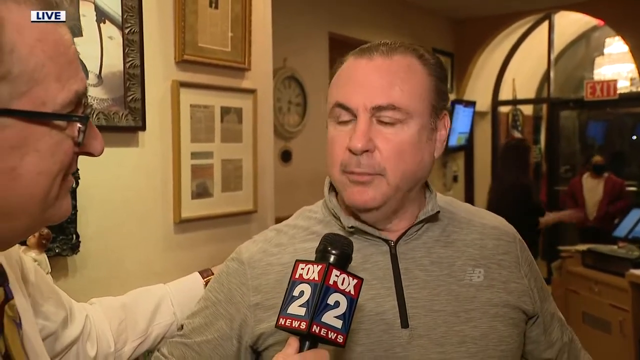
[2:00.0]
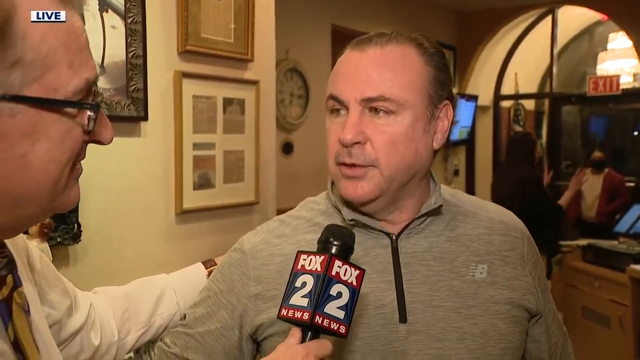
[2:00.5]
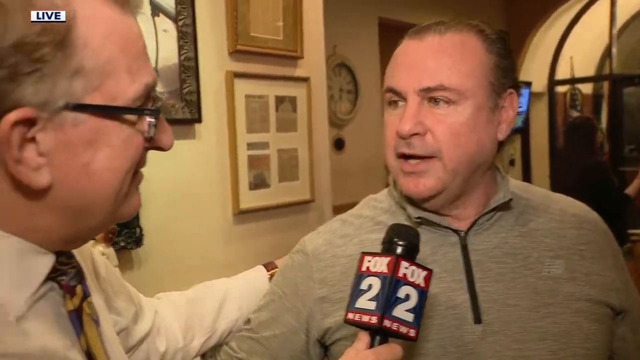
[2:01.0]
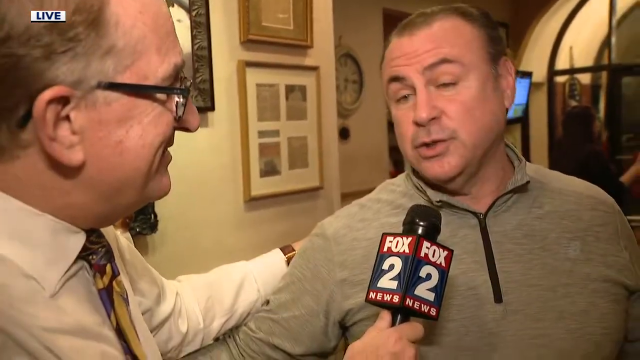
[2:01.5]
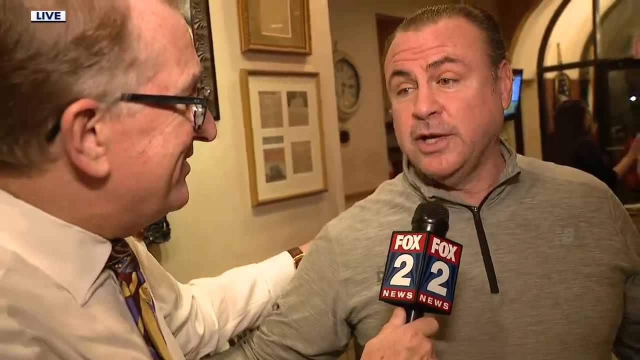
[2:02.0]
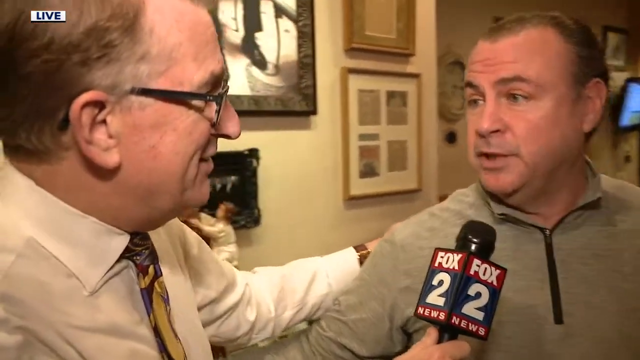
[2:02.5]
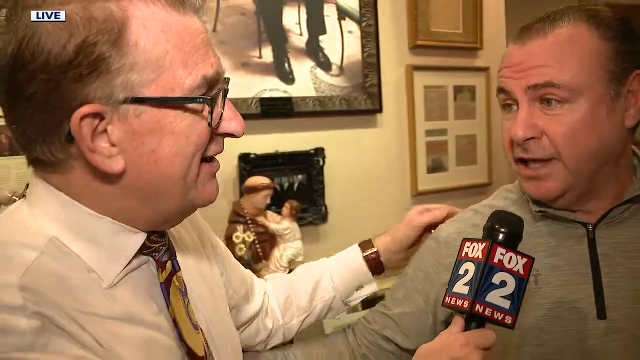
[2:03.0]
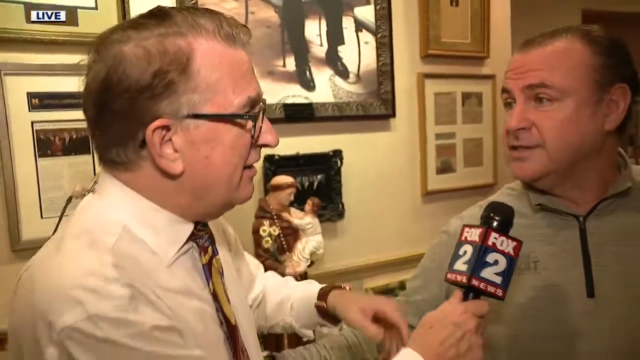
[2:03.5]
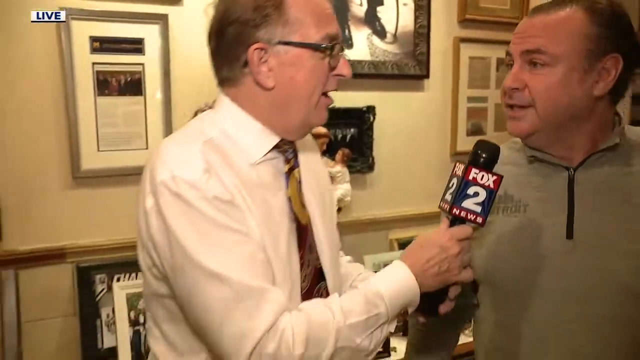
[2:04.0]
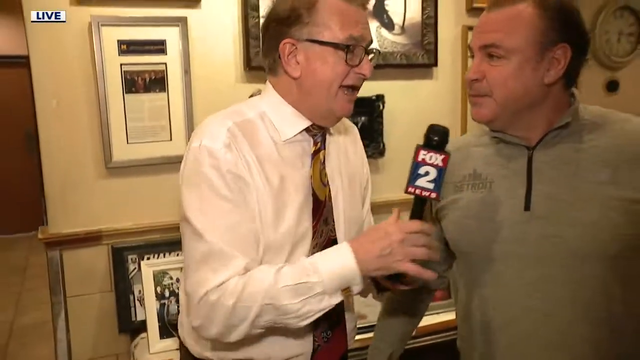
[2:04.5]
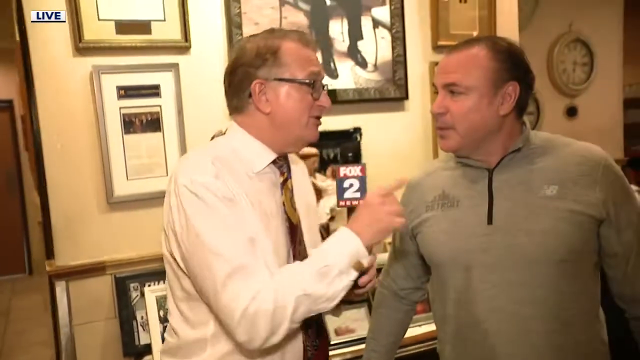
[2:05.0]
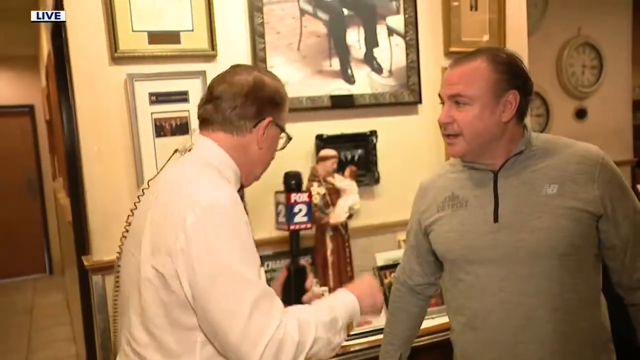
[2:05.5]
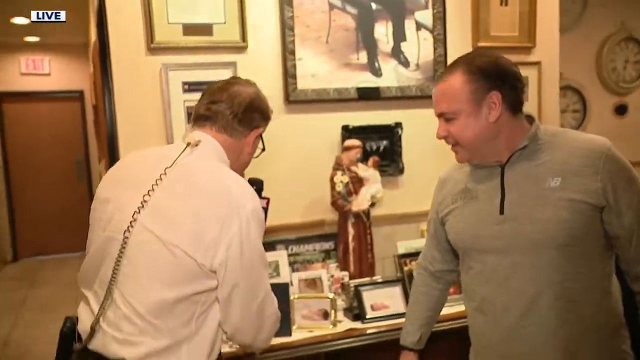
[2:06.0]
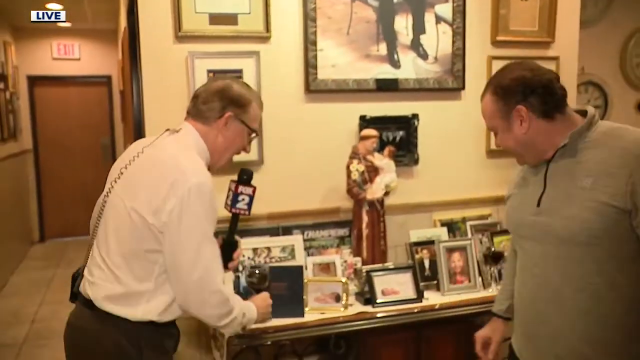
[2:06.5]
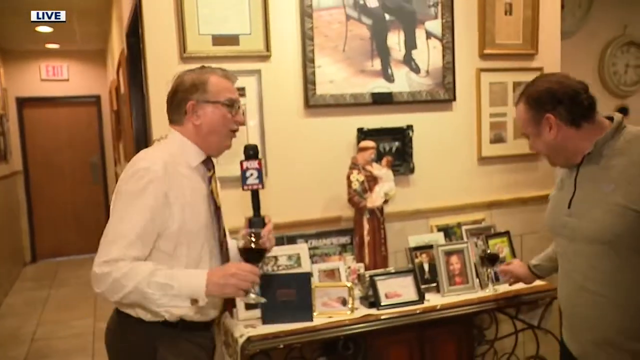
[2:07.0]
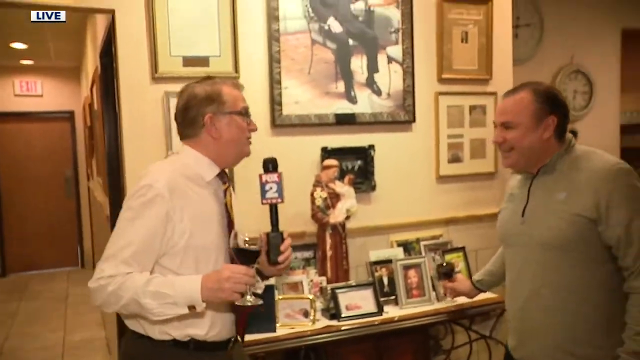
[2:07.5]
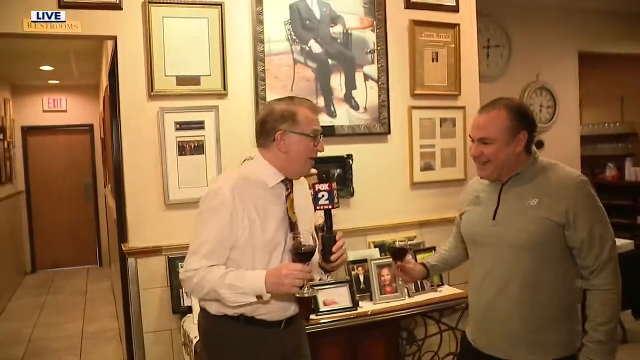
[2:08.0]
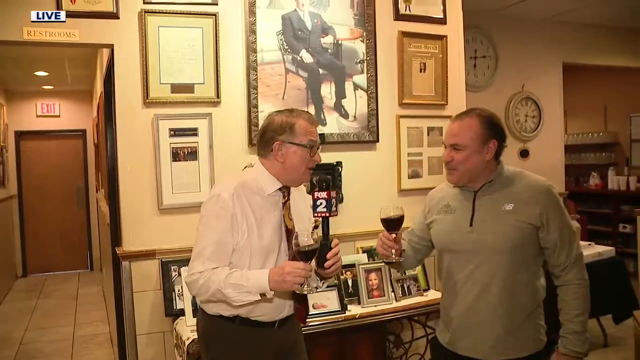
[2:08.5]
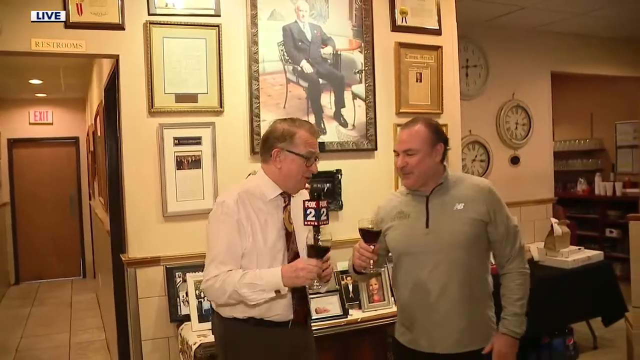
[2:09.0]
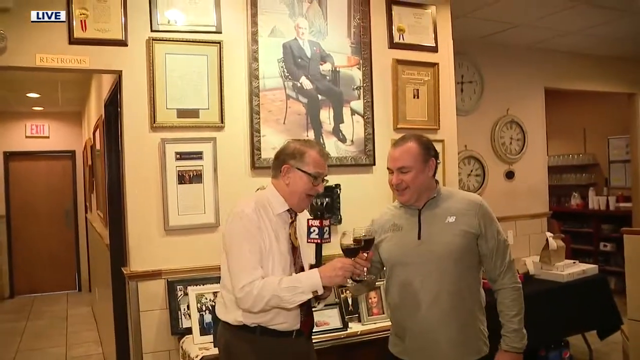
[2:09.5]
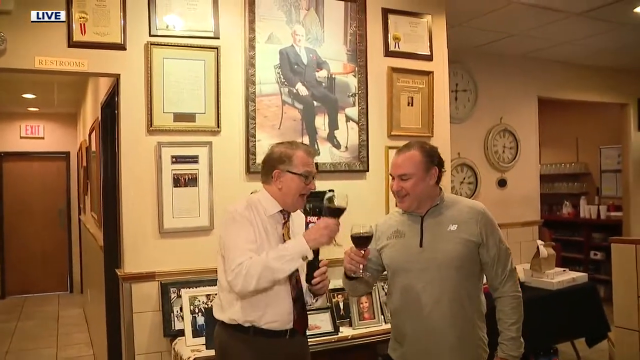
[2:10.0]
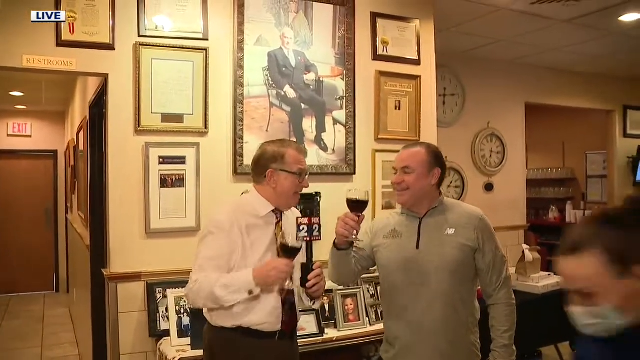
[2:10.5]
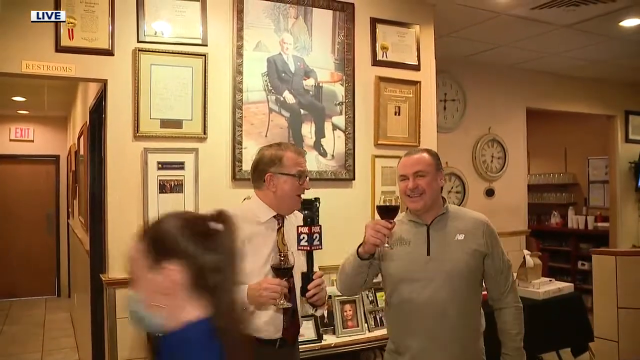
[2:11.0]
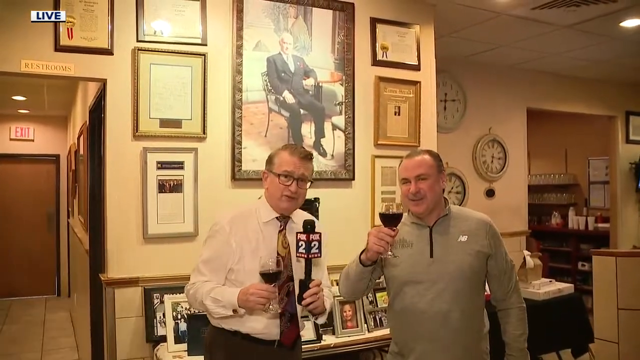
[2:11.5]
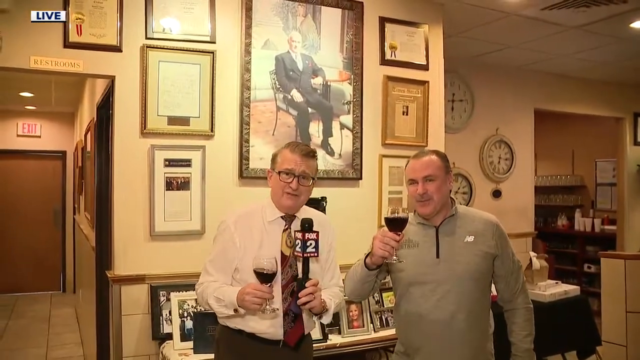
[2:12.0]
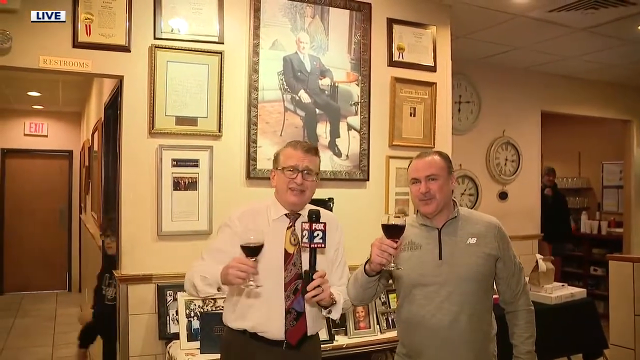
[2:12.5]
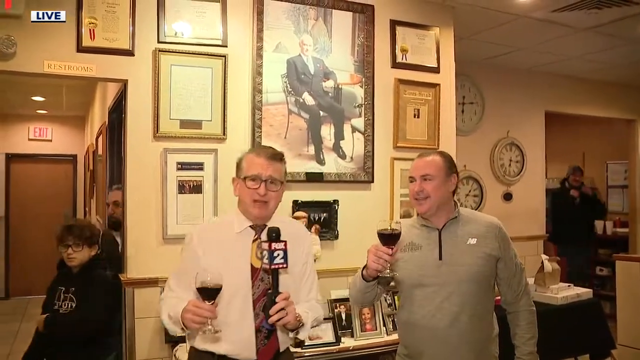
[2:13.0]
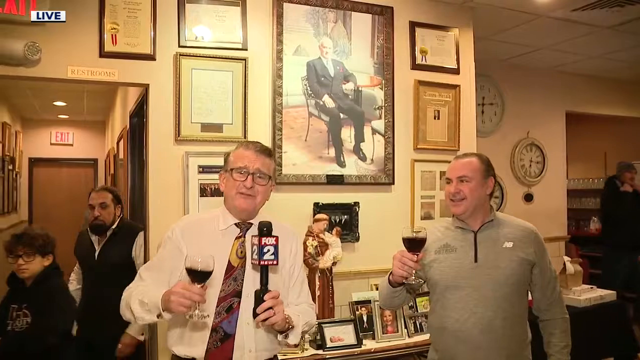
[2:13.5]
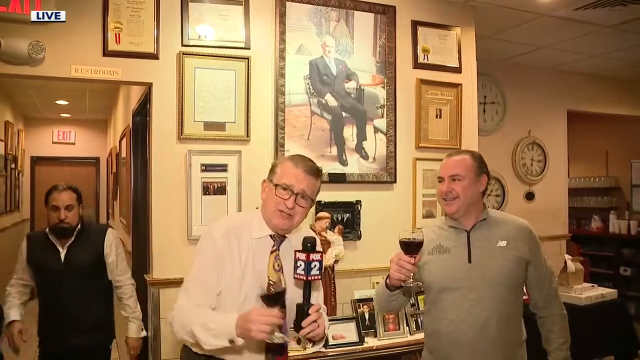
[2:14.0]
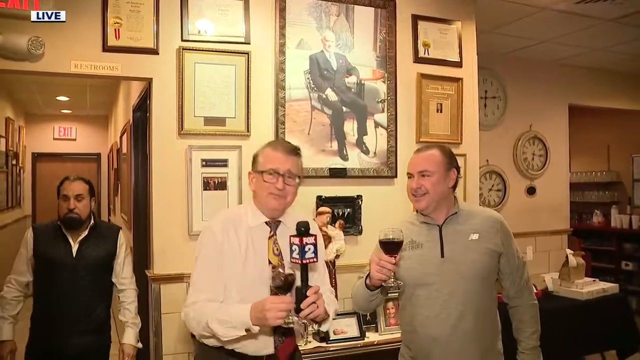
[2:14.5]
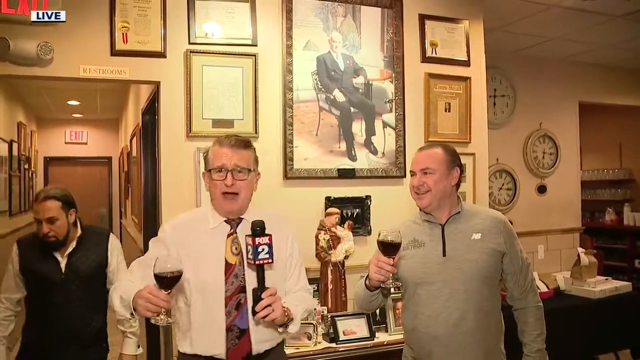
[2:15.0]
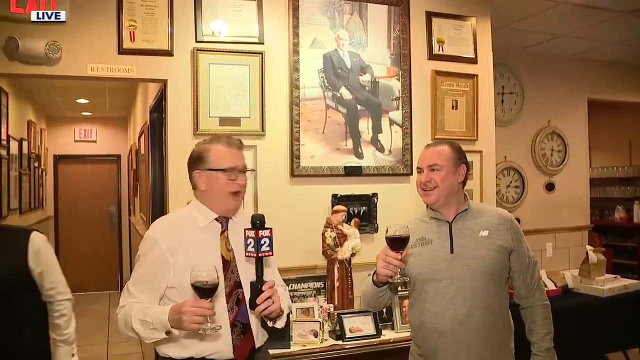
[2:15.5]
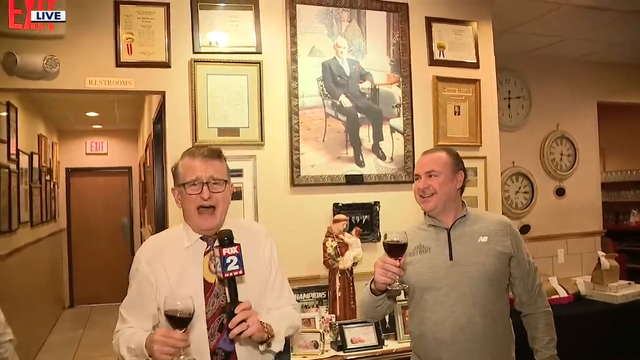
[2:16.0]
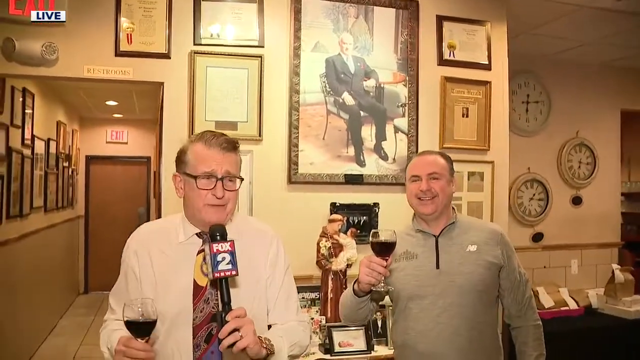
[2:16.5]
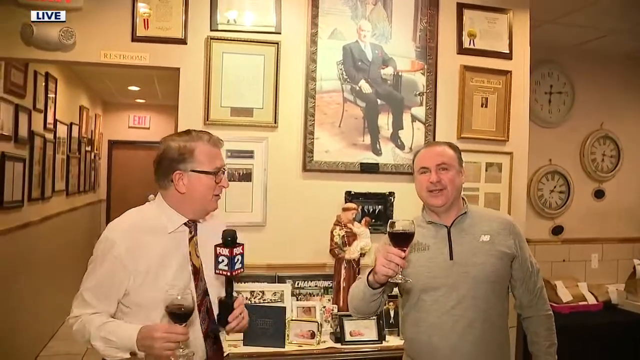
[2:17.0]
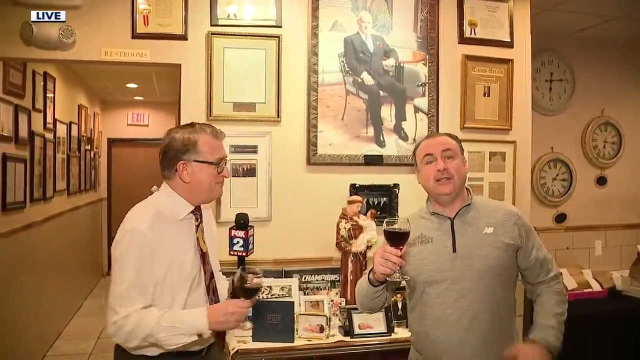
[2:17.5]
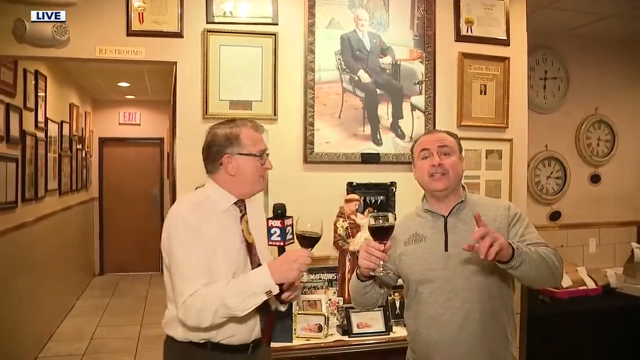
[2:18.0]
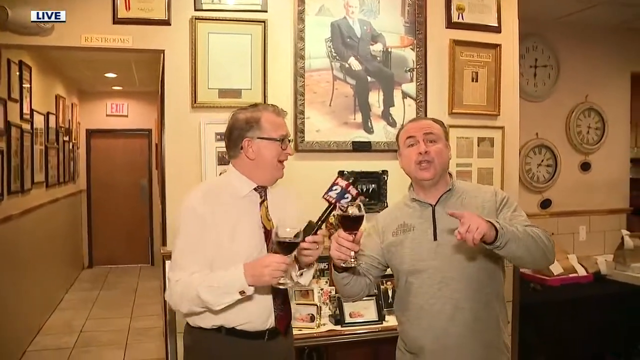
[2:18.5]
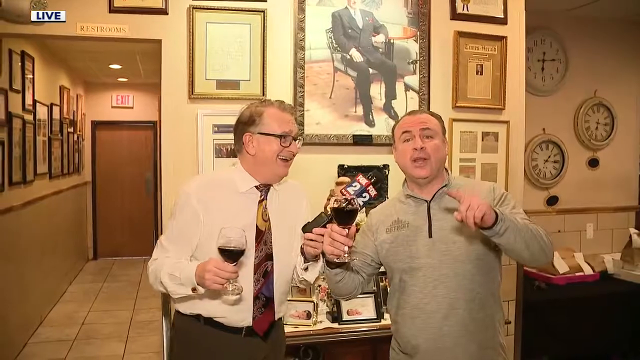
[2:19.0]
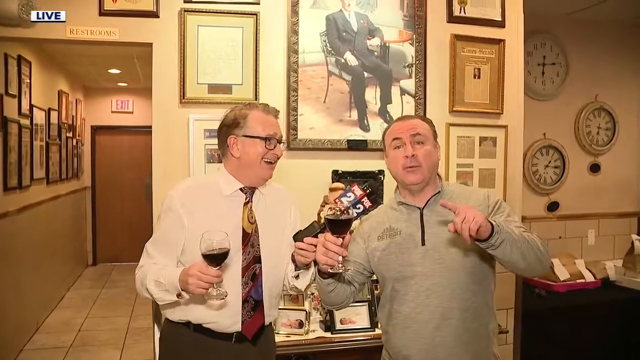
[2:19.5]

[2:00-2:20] The owner talks, his gray pullover zipped up to the base of his neck. Between the two men, standing against the wall, is a figurine of what looks like a monk wearing a draped robe and some kind of chain, carrying a little baby in a white robe; it is actually quite a large statue, probably about a foot tall. There are additional picture frames of different styles, some landscape and some vertical, of different people. The reporter moves to the side, and he and the owner each get a glass of red wine. They toast, and the reporter goes on a very long walk and exuberant display of announcement. A couple of people come out of the bathroom, and the owner makes some comments to the camera.